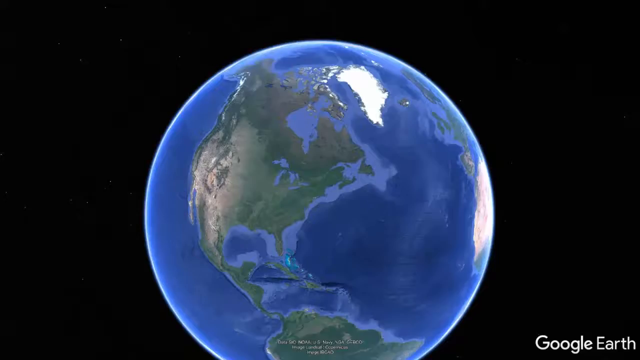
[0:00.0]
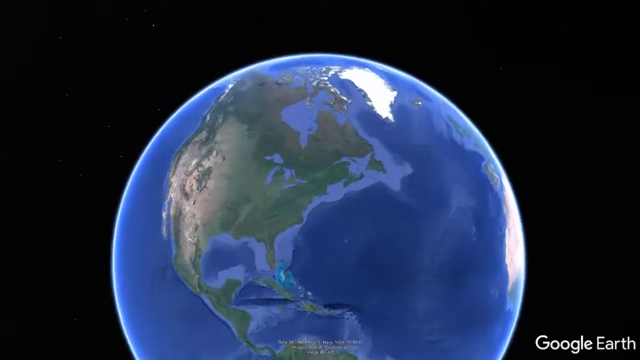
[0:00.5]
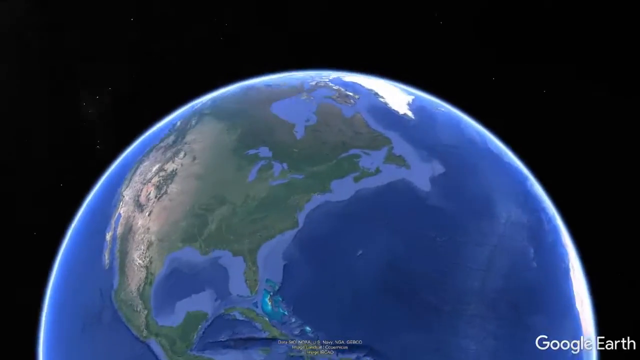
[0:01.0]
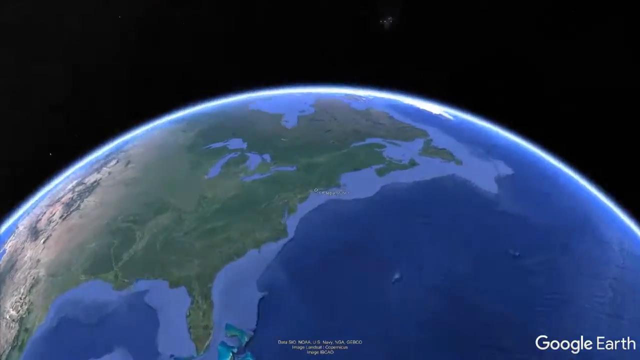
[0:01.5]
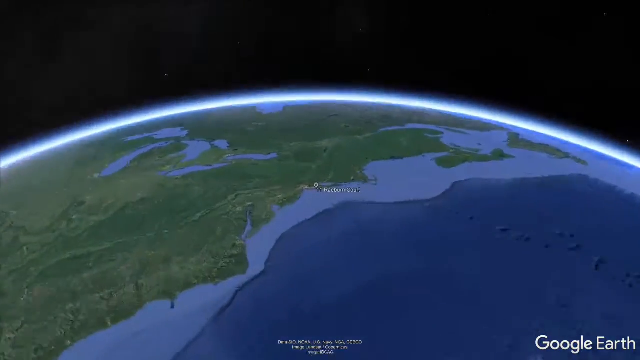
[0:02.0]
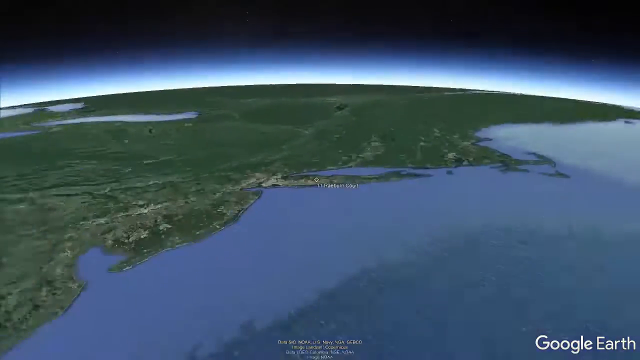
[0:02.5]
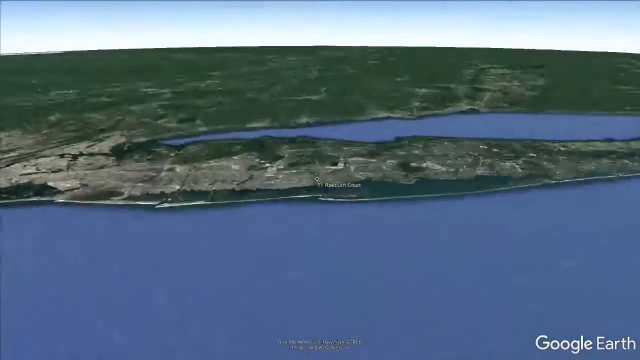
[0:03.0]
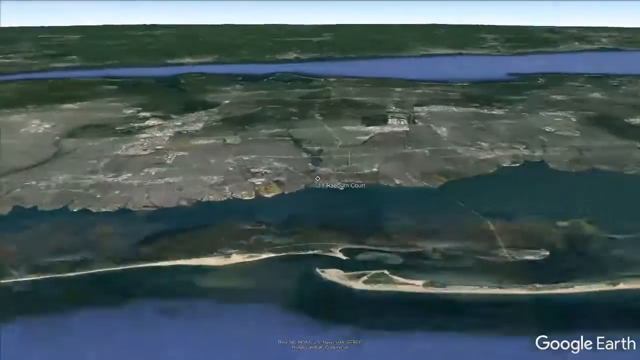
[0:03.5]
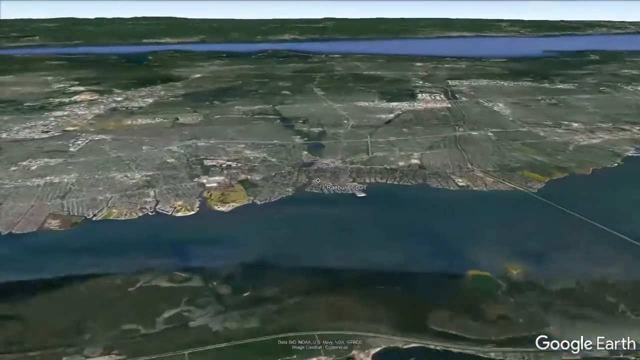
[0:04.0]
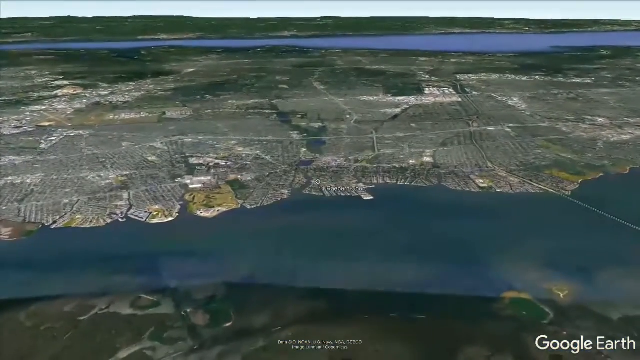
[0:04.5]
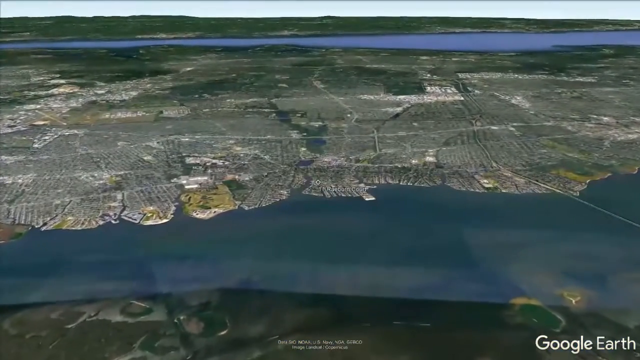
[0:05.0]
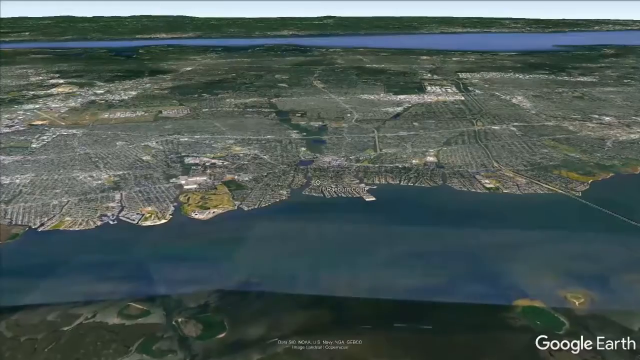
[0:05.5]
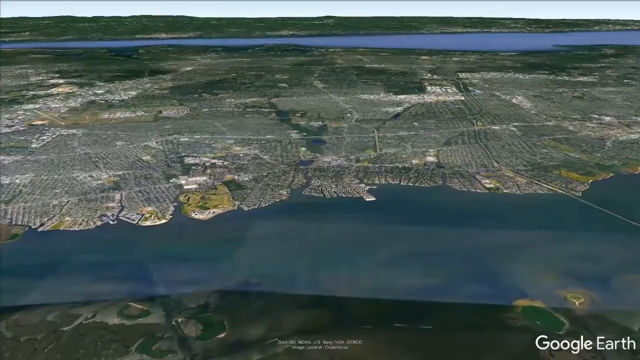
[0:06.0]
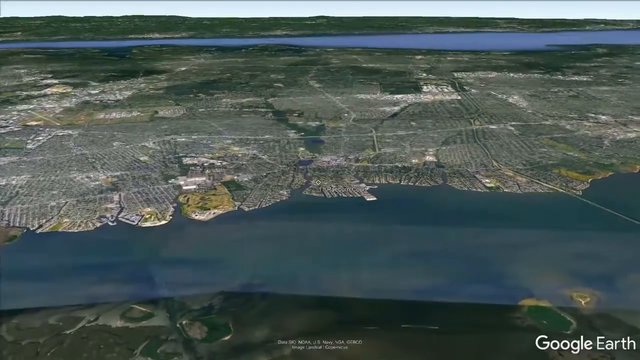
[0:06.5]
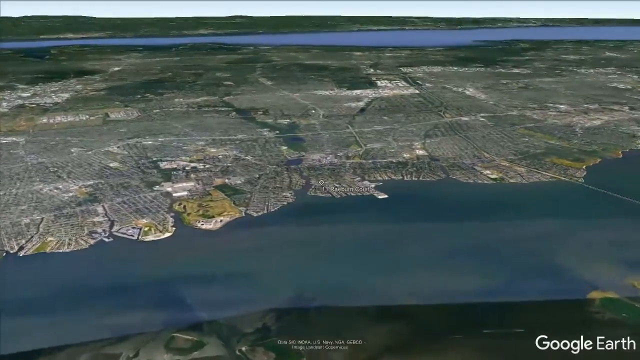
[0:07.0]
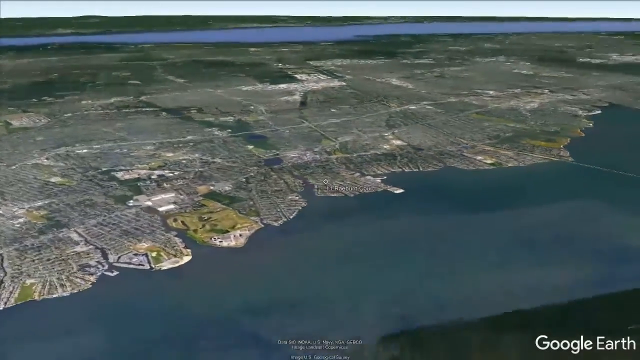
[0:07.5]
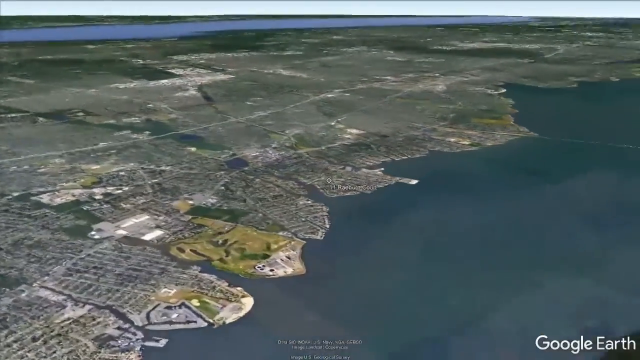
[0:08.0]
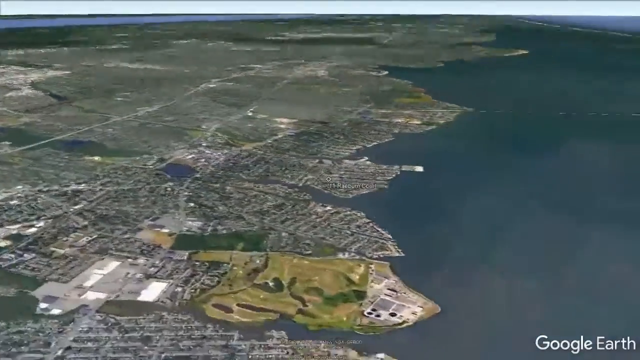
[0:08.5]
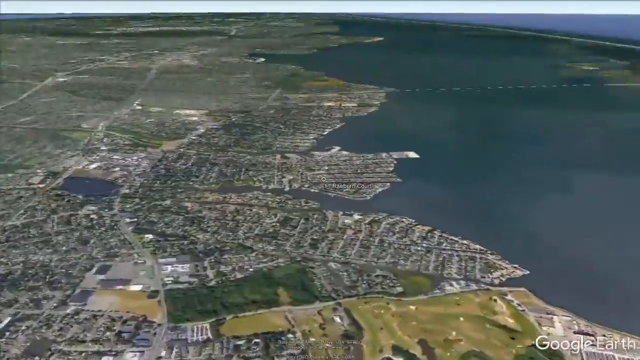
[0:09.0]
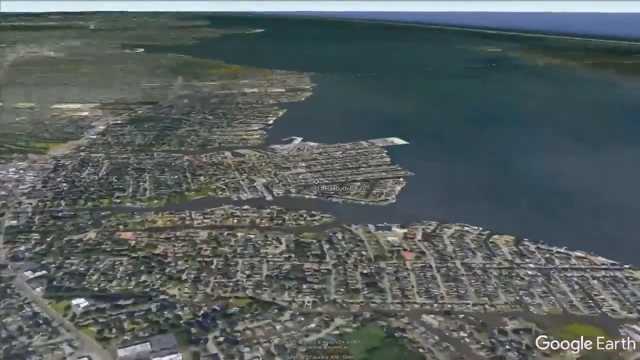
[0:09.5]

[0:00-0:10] The video opens on a 3D image of the world against a black background, spinning as the view zooms in. As it gets closer, land comes into view, and it zooms into the edge of the ocean, where lots of tiny buildings can be made out on the land. The view scrolls around, and the bottom right corner shows that this is Google Earth. It slowly zooms closer. The buildings are flat: there are no 3D images of the houses, but the layout of where the houses are can be seen. The movement is smooth and fluid. The country does not appear to be named.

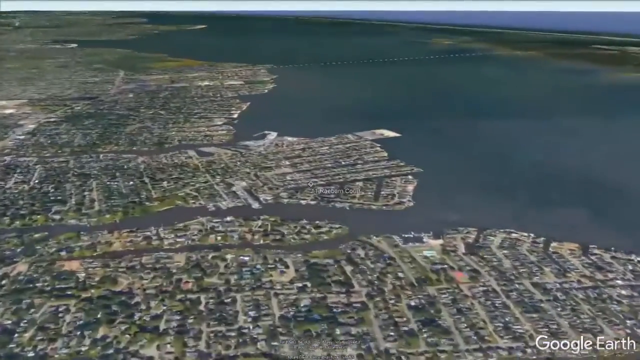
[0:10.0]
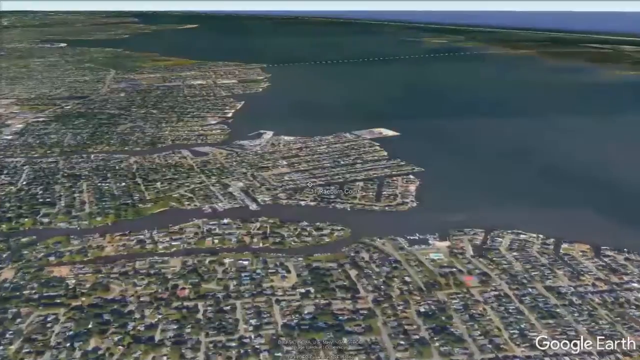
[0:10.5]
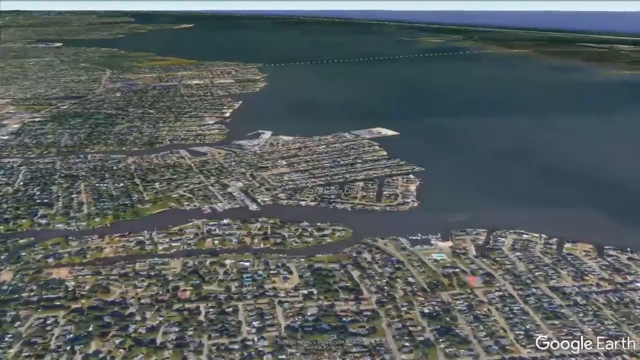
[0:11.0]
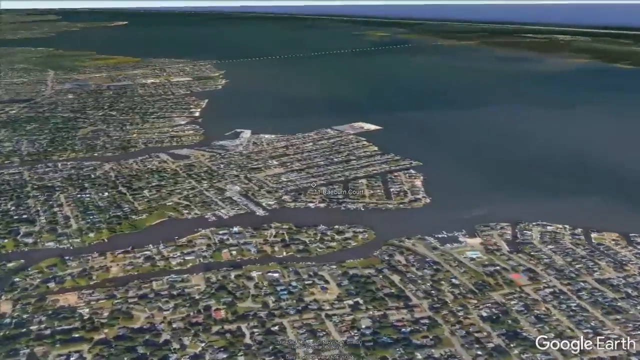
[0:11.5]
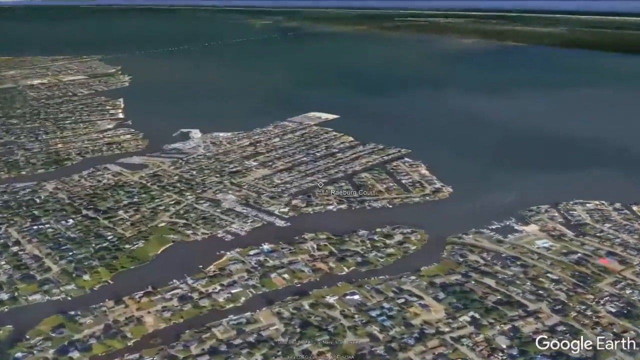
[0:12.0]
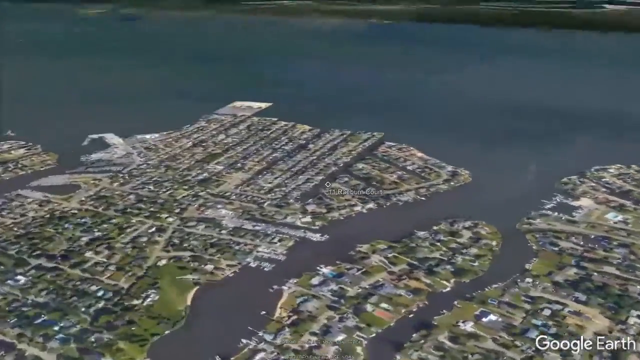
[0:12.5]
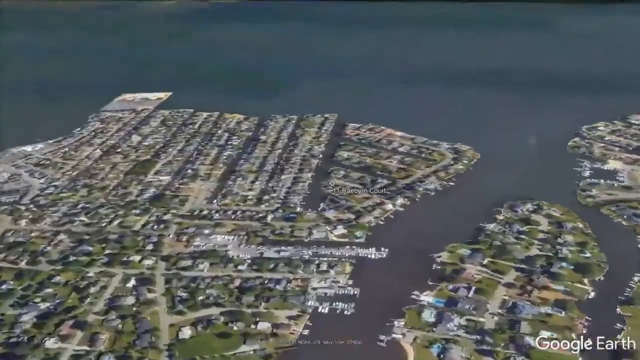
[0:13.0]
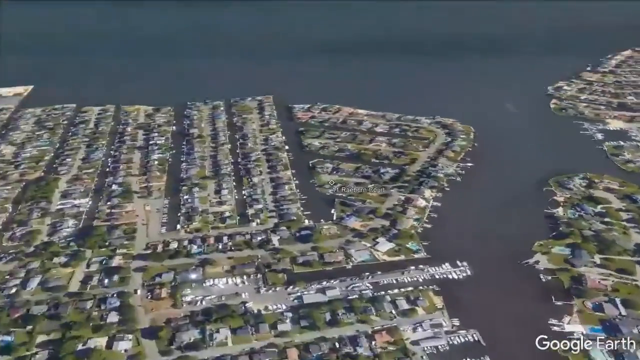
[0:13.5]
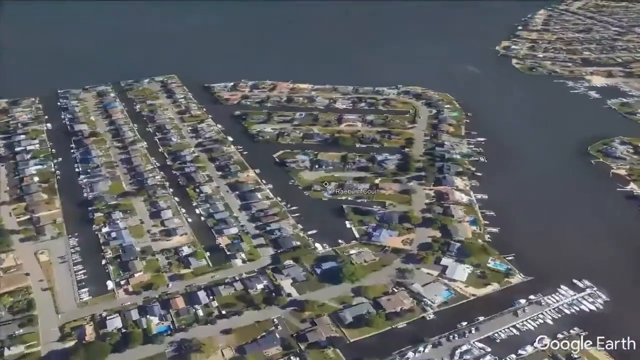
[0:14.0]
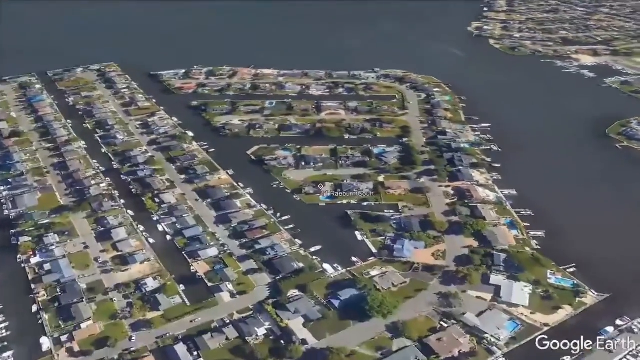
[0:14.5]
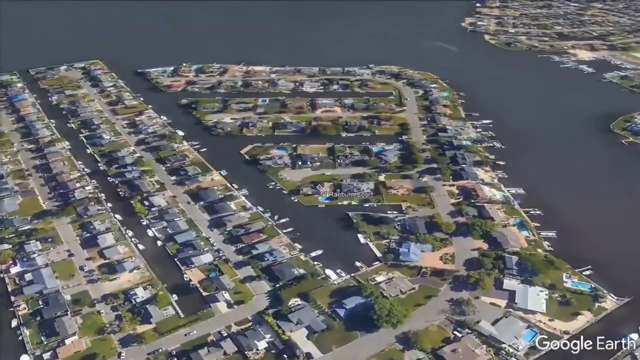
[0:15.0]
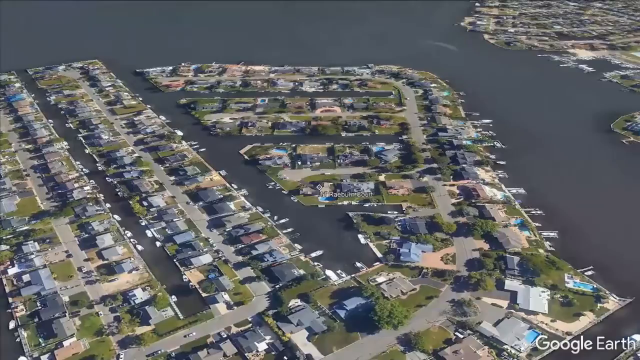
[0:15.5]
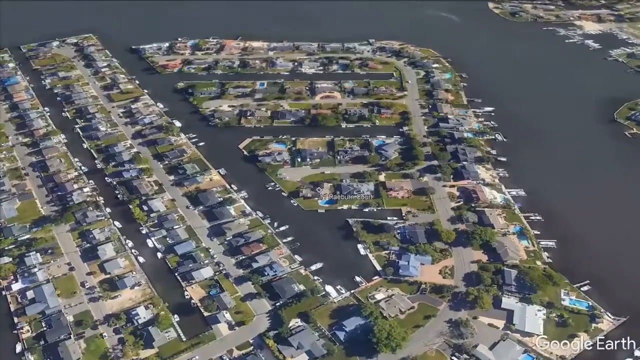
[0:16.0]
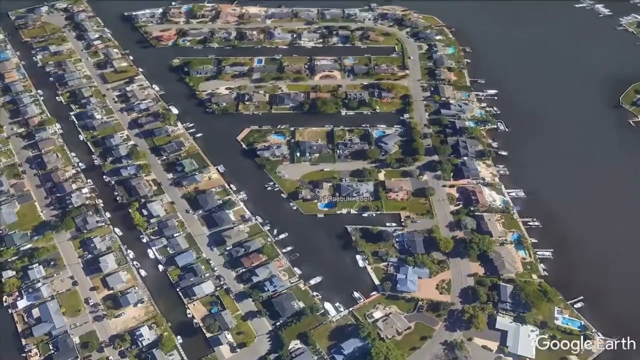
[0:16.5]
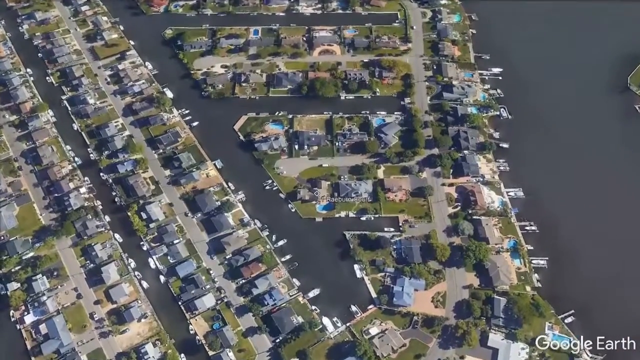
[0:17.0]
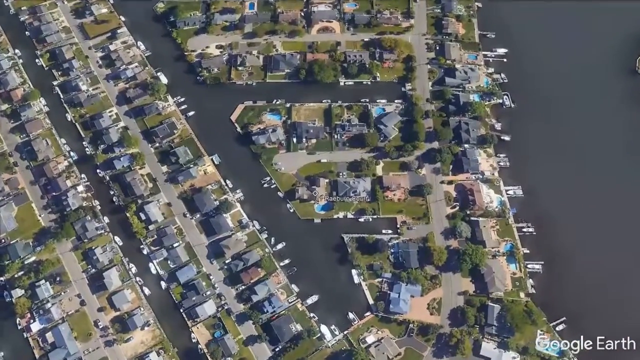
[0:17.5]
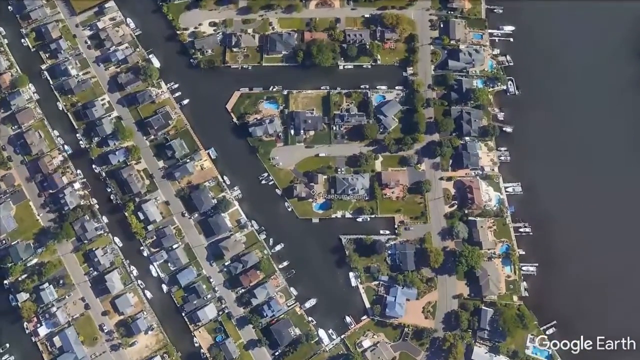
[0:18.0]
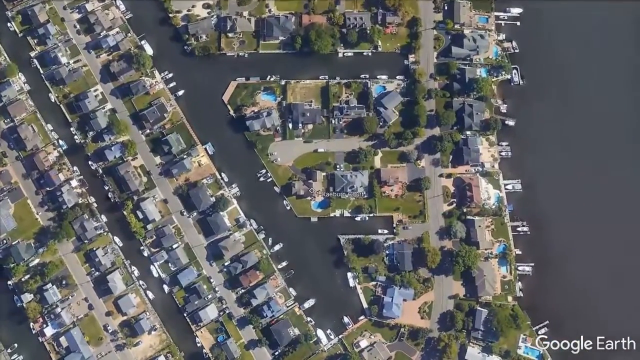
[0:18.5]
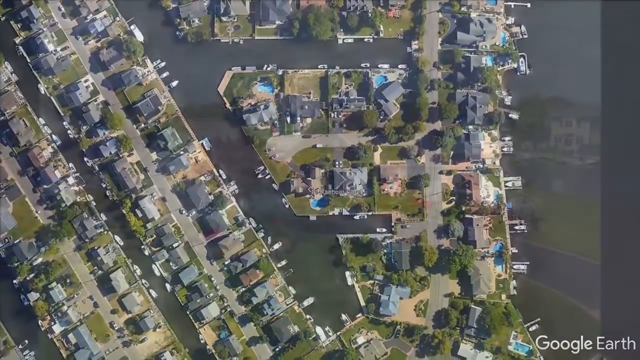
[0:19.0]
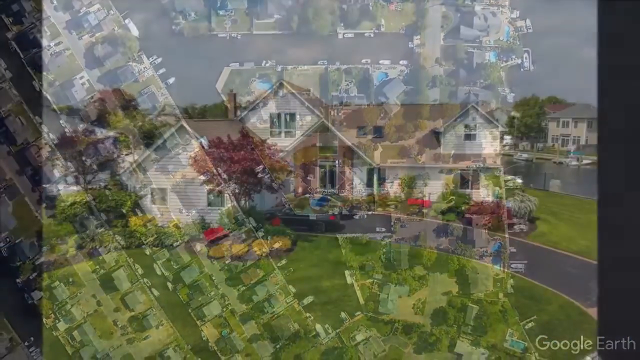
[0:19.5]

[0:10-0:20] The view keeps panning around and moving closer, and what appear to be houses are now visible in much more detail, though they are still flat 2D images. The roofs of the houses and where they are situated can be made out. The camera then pans to a complete overhead view of the houses, and many of them have very bright blue swimming pools in their back gardens. The shot then changes to the outside front of a house.